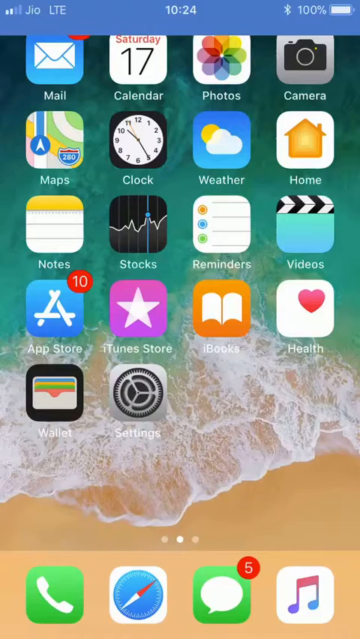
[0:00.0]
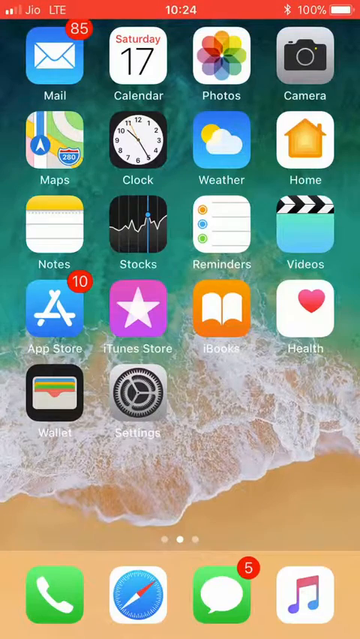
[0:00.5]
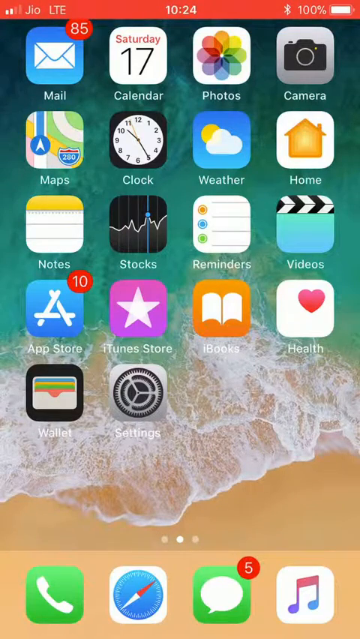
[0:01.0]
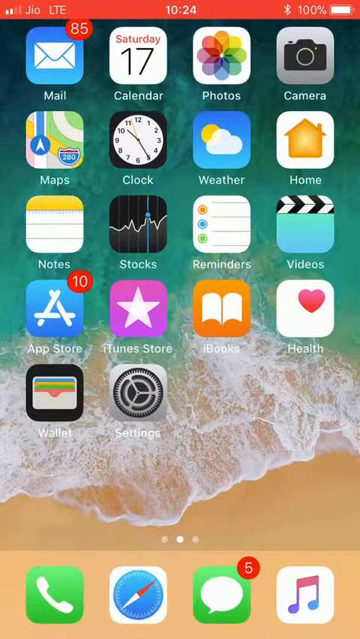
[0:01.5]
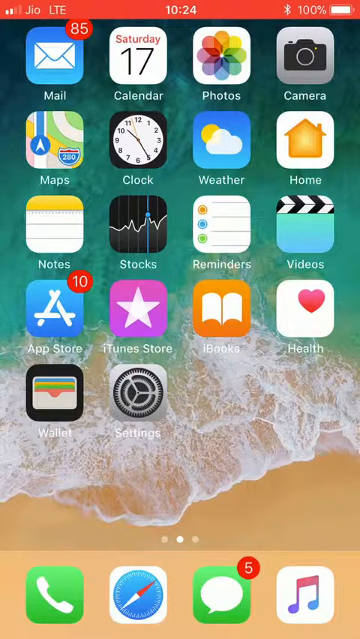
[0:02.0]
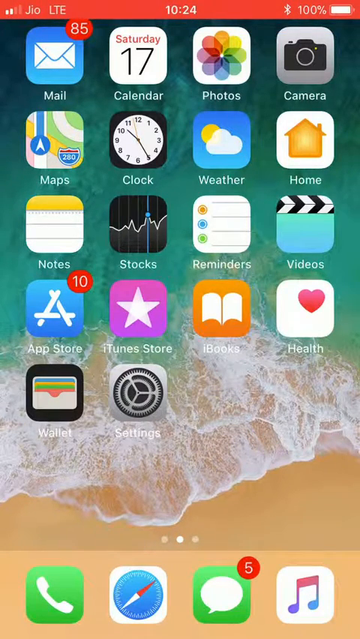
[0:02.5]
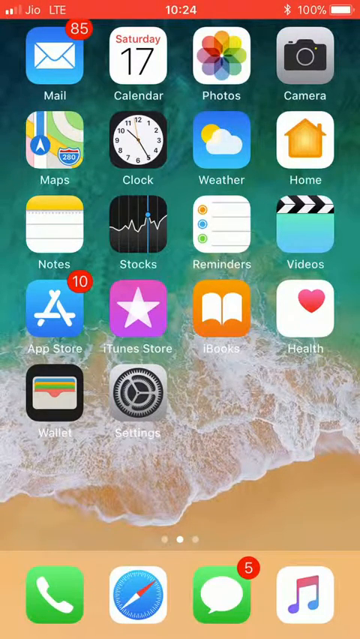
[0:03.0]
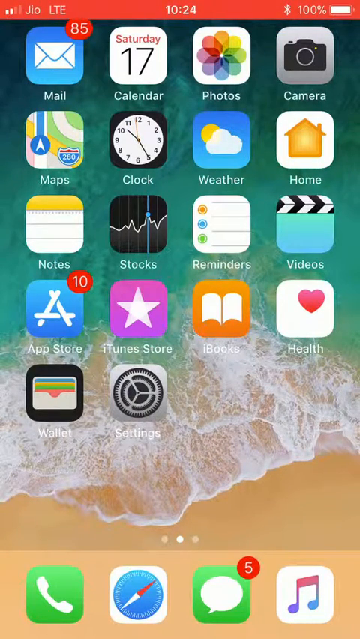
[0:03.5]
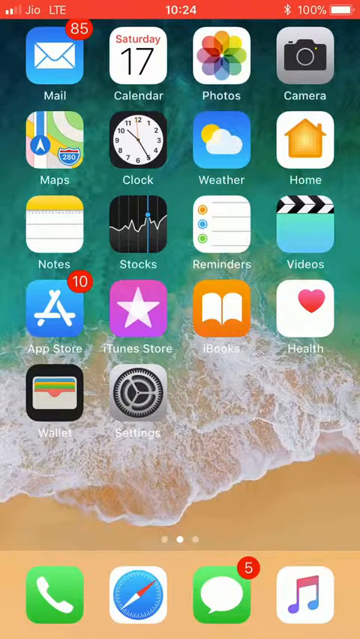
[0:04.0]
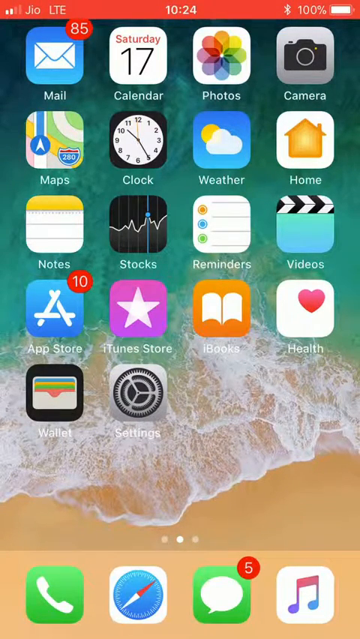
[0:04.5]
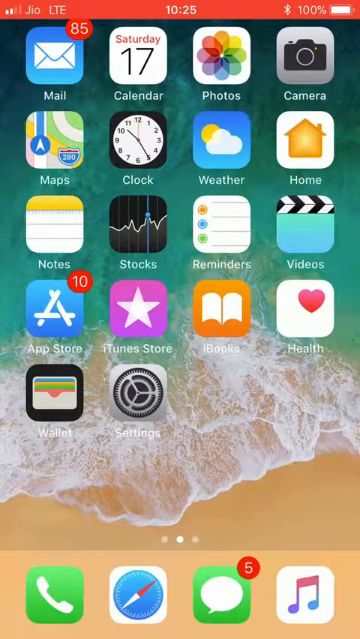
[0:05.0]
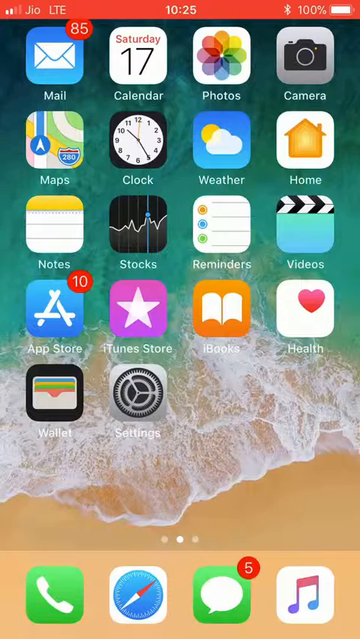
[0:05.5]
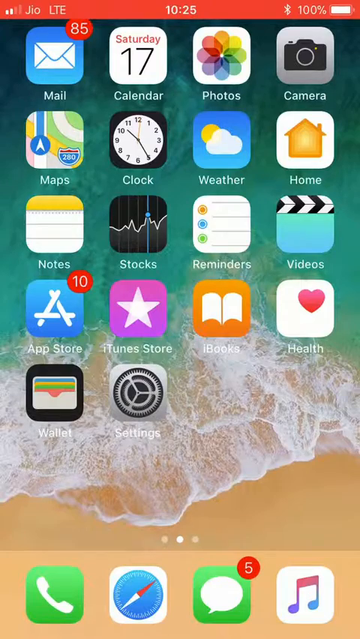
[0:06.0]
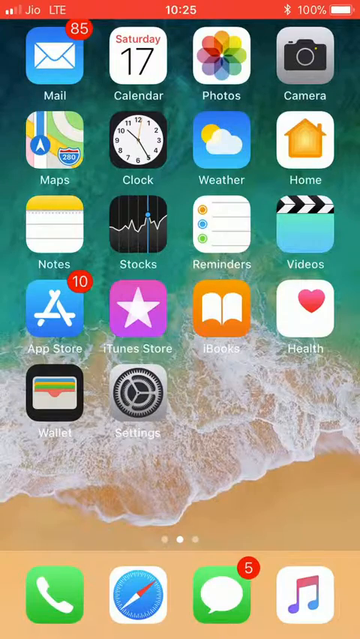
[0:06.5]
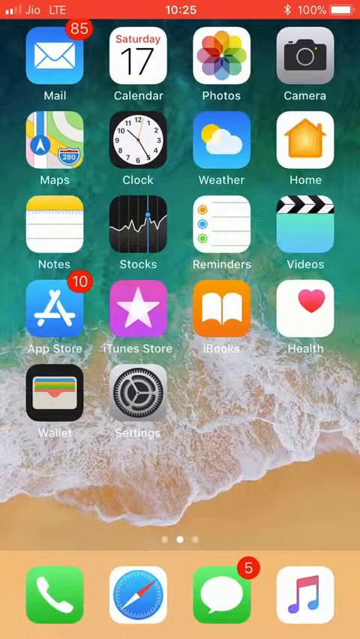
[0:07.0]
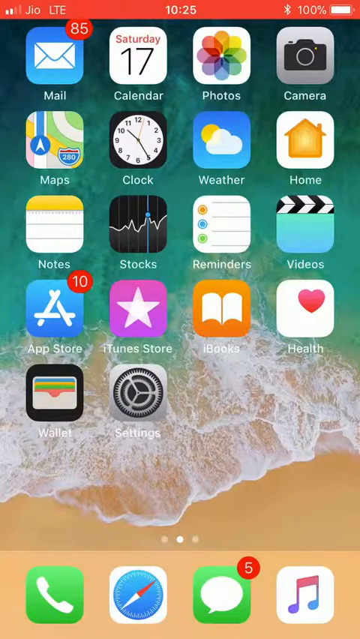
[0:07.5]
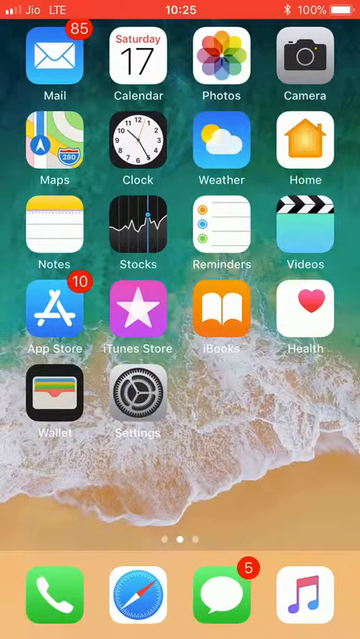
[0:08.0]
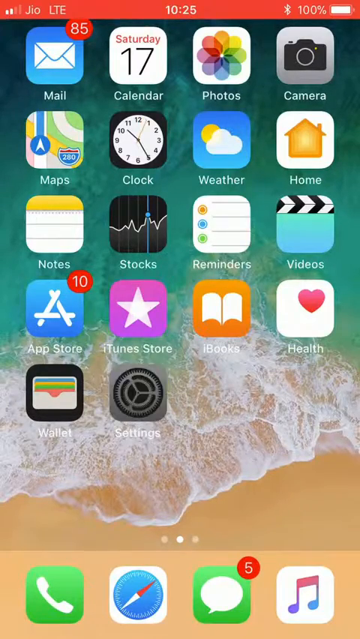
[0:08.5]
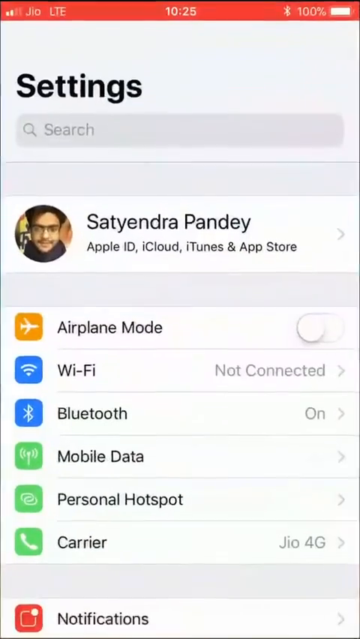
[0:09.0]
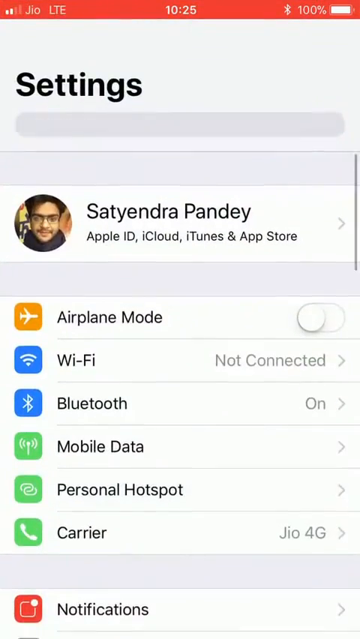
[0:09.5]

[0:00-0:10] Someone's phone shows a home screen with a number of apps, including a mail icon showing 85 emails, plus calendar, photos, camera, maps, clock and weather. Their face briefly appears, then the view returns to the apps: maps, clock, weather, home, notes, stocks, reminders, videos, App Store, fitness store, books, health, wallet and settings. The person's face and name briefly come up and quickly go away. The name is Satyendra Pandey, with Apple ID, iCloud, iTunes and App Store listed, followed by options for airplane mode, Wi-Fi, Bluetooth, mobile data, personal hotspot and carrier.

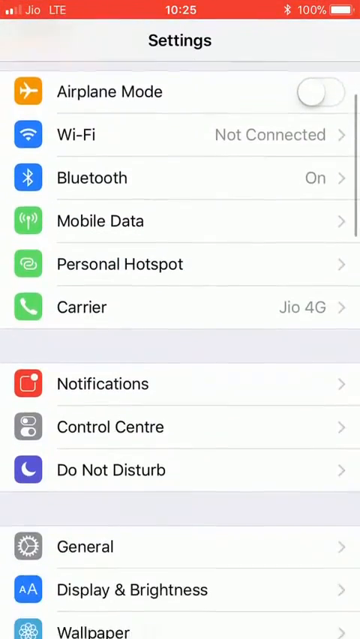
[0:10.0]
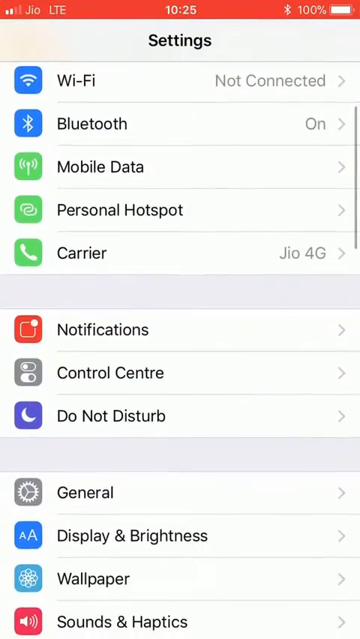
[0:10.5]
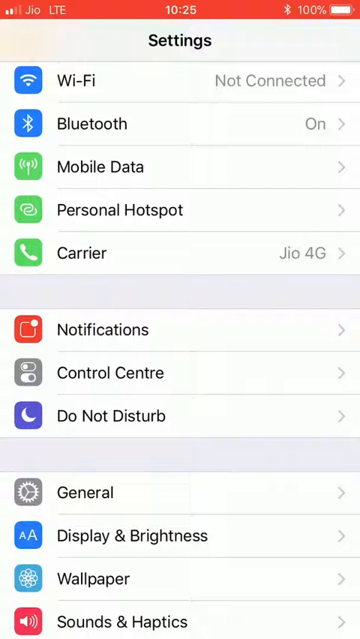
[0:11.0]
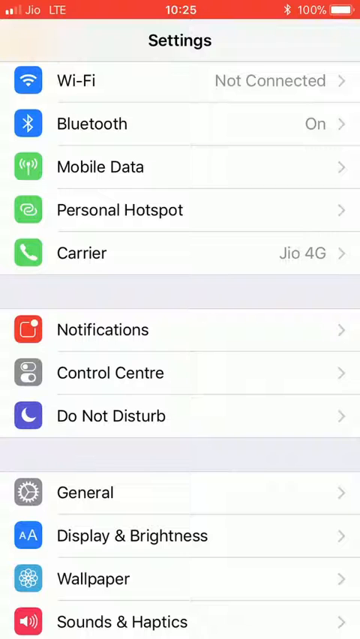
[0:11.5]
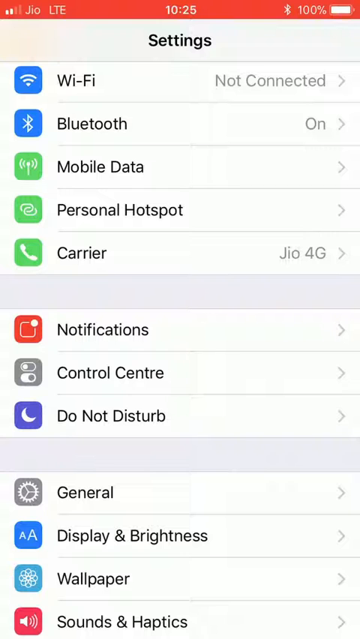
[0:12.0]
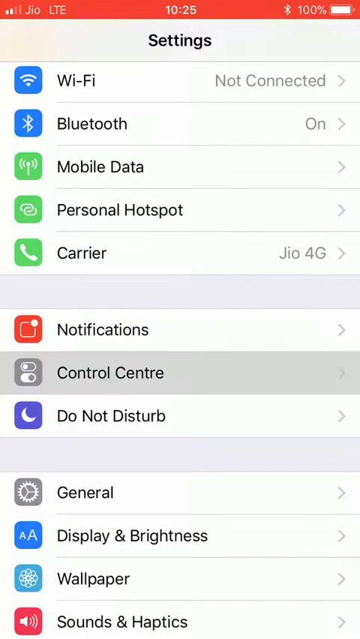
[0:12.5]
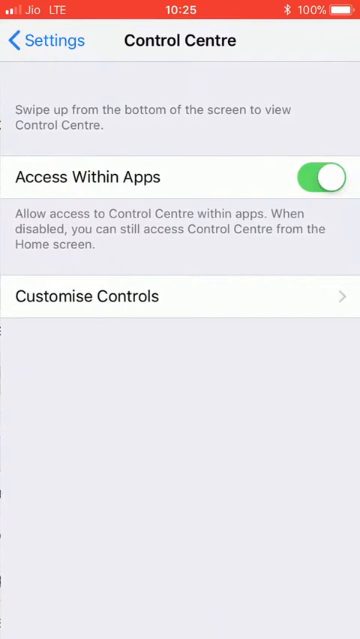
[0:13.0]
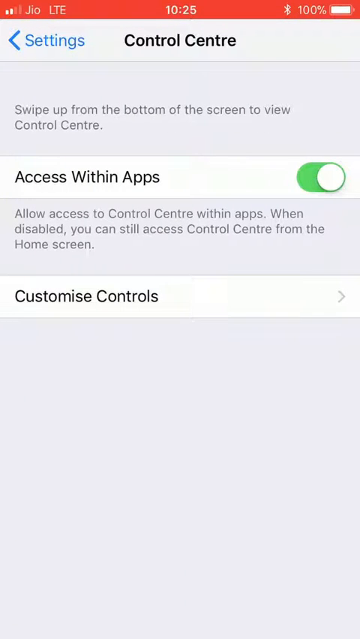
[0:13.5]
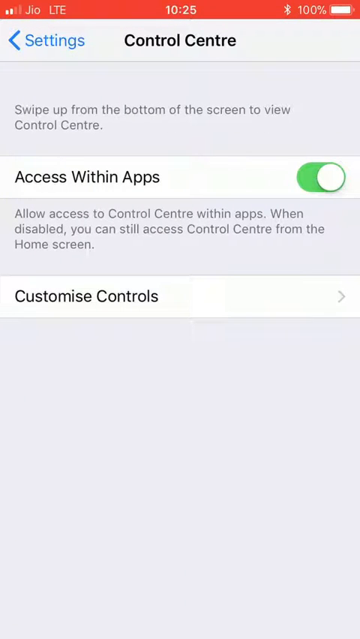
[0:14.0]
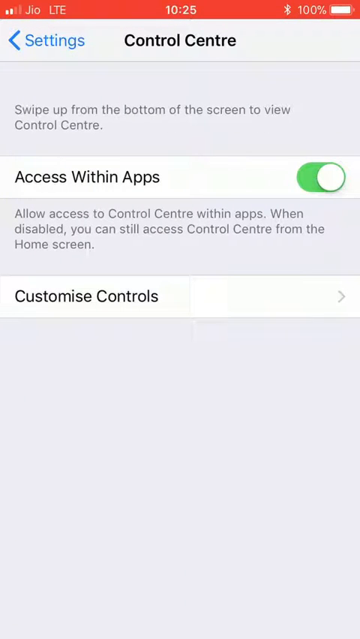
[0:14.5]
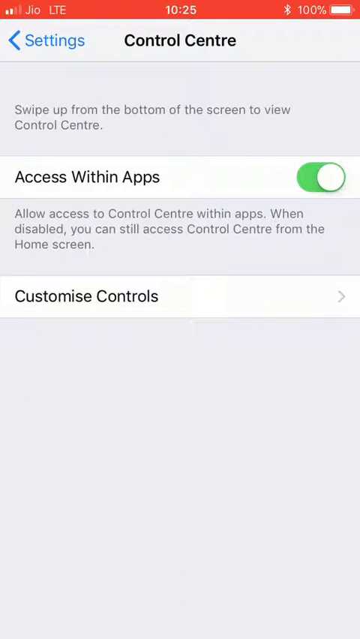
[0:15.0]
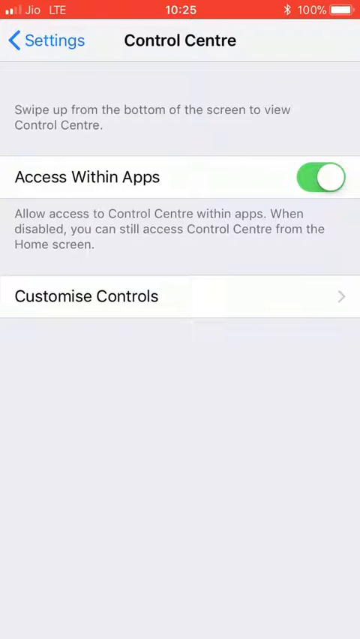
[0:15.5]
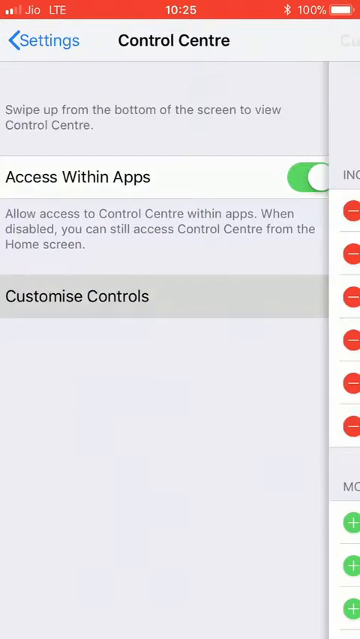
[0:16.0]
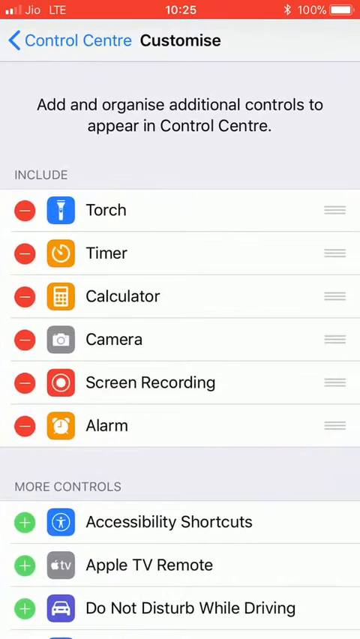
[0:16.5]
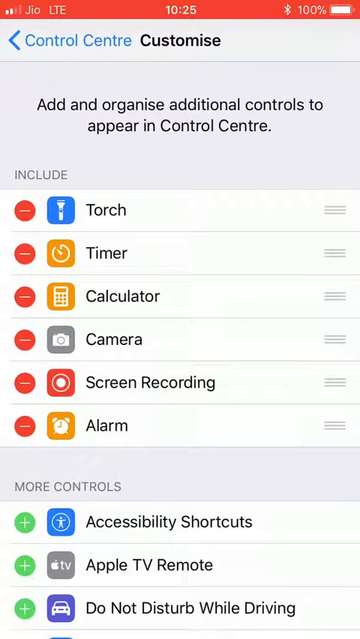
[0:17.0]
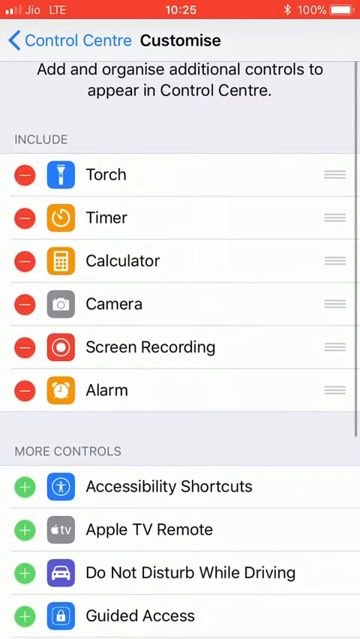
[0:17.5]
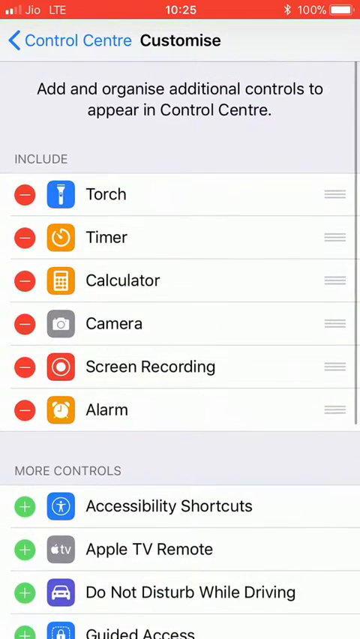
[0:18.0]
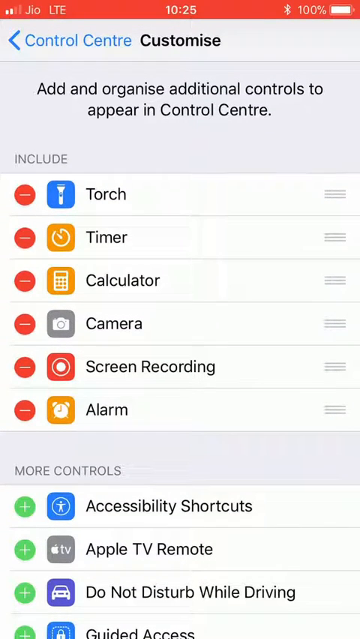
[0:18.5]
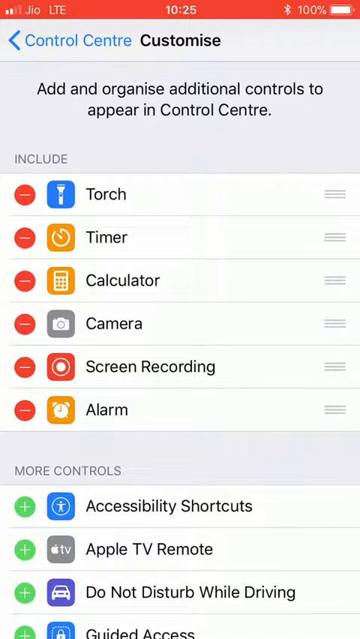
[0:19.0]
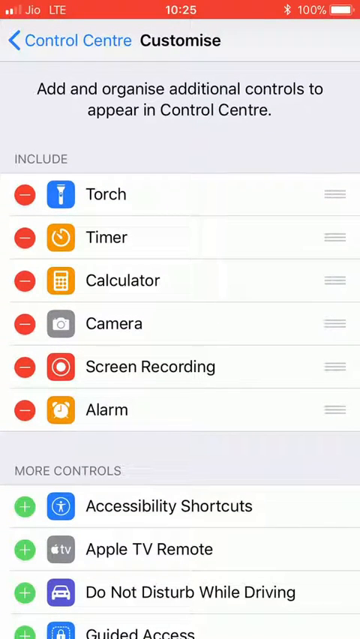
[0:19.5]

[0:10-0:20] The settings list shows airplane mode, Wi-Fi, Bluetooth, mobile data, personal hotspot and carrier, and then options for notifications, Control Center, do not disturb, general, display and brightness, wallpaper and sound. The screen then goes to a gray background, and he moves to a set of options: torch, timer, calculator, camera and screen recording, returning to his original Control Center. Below screen recording are alarm, accessibility shortcuts, Apple TV remote and do not disturb while driving.